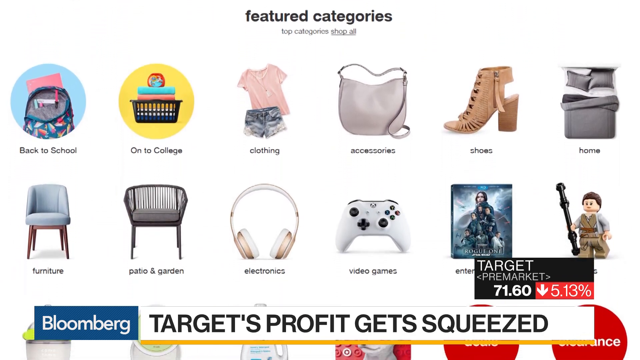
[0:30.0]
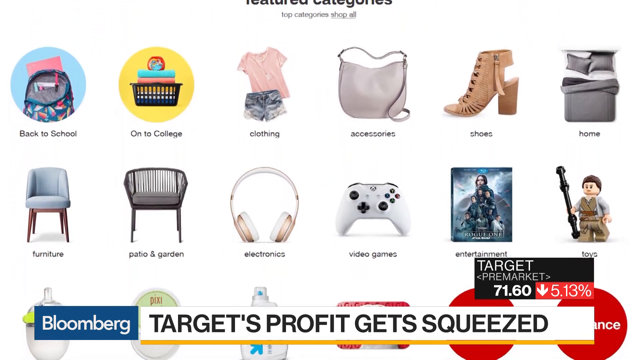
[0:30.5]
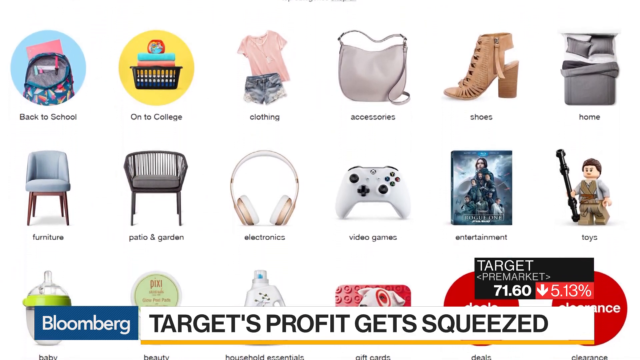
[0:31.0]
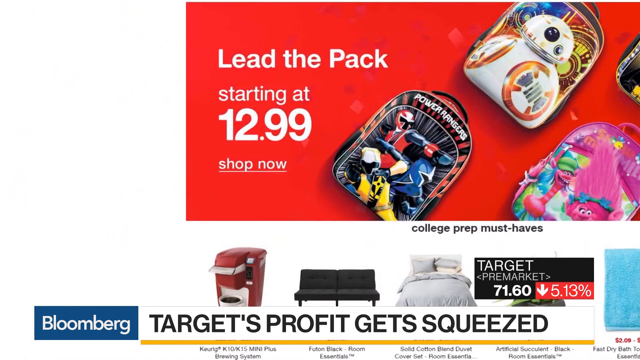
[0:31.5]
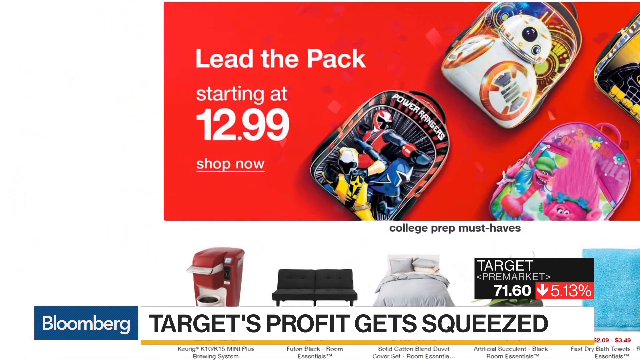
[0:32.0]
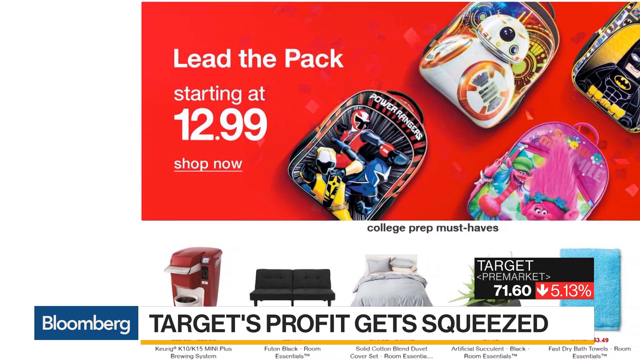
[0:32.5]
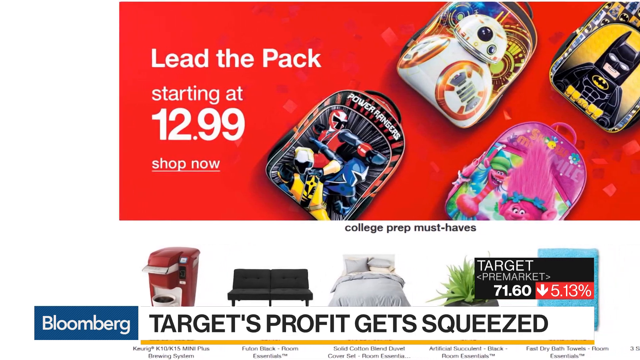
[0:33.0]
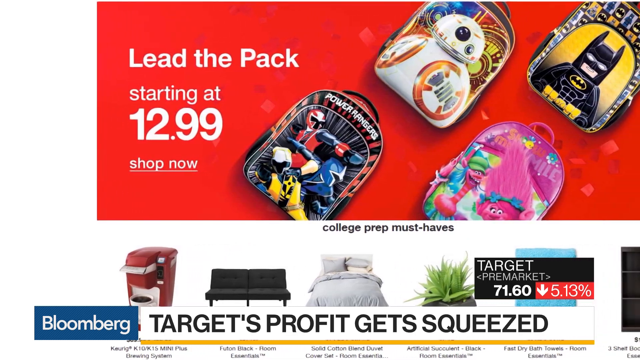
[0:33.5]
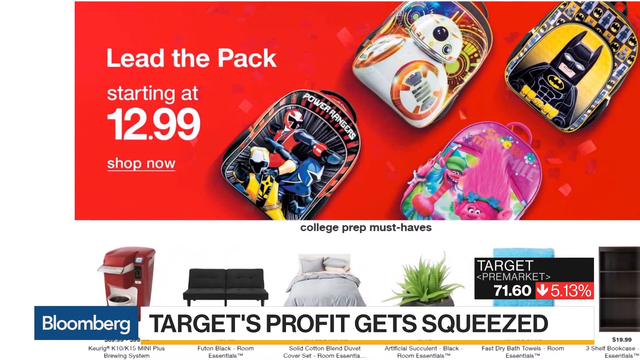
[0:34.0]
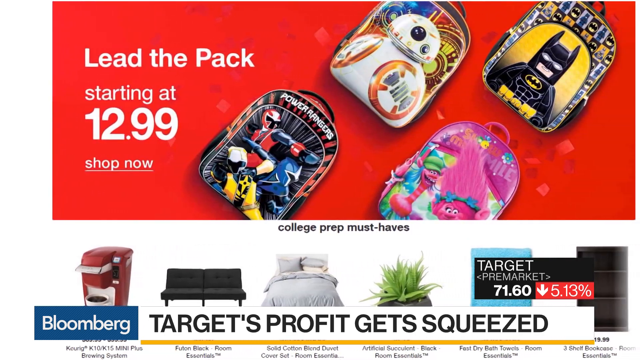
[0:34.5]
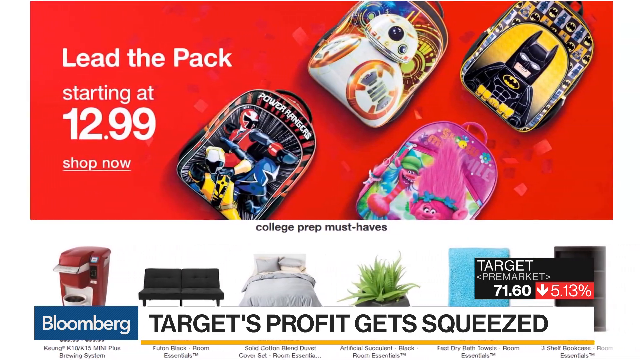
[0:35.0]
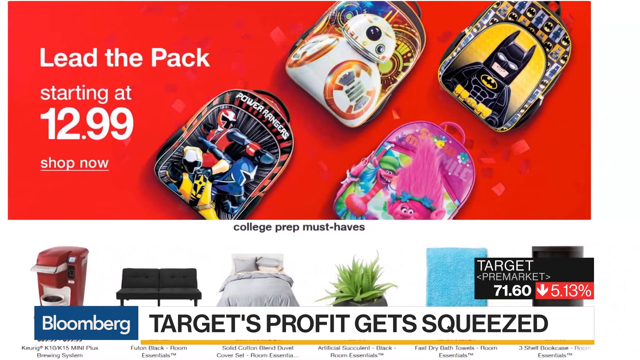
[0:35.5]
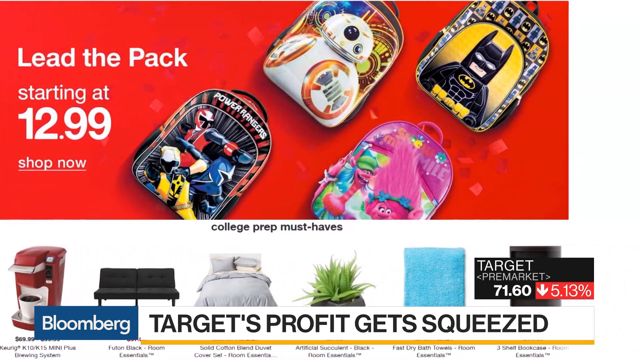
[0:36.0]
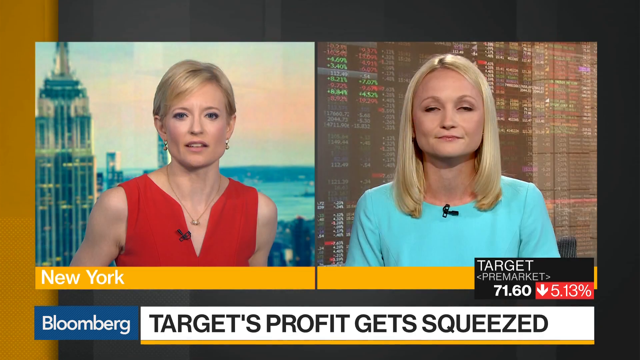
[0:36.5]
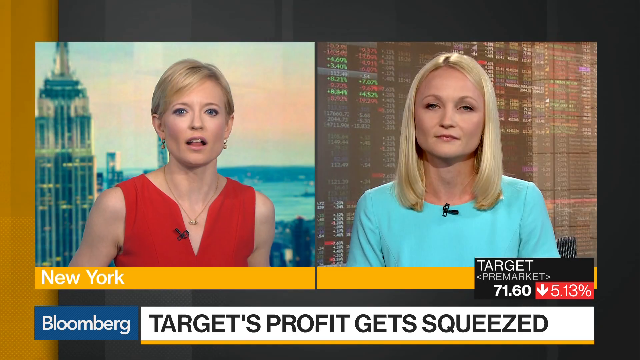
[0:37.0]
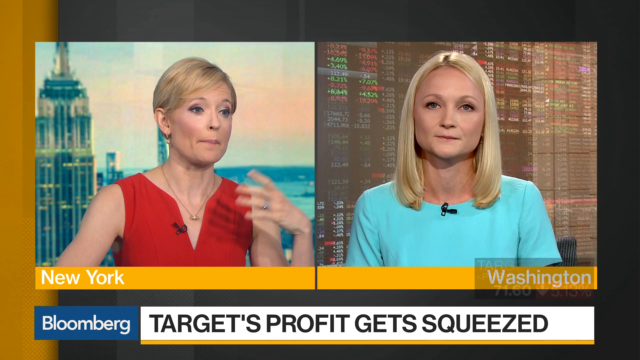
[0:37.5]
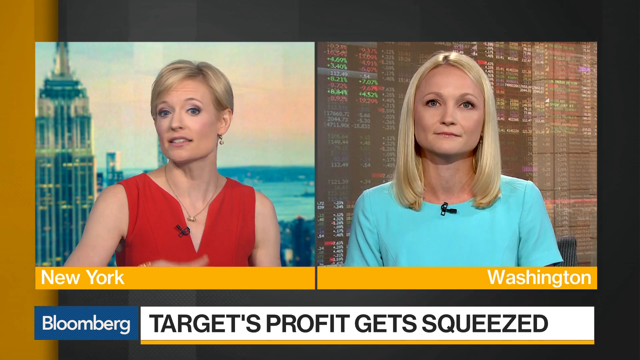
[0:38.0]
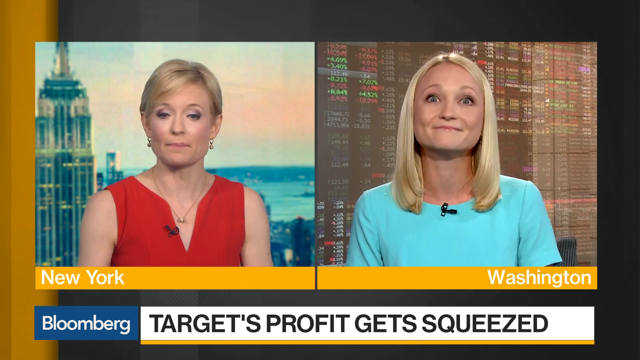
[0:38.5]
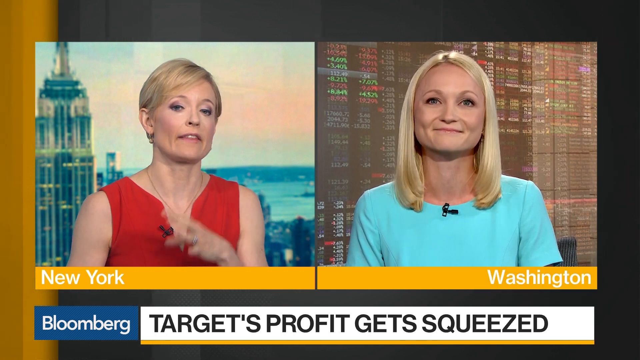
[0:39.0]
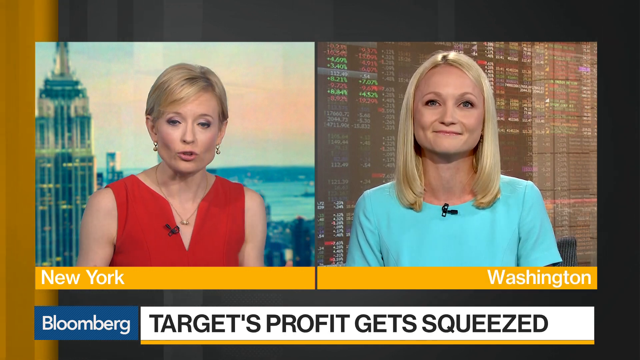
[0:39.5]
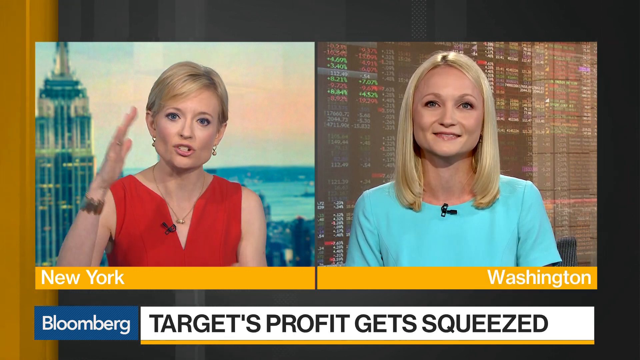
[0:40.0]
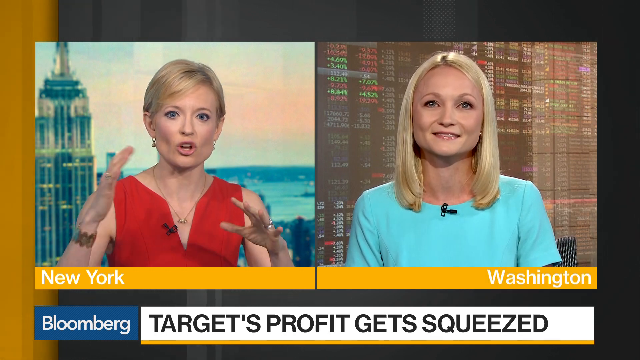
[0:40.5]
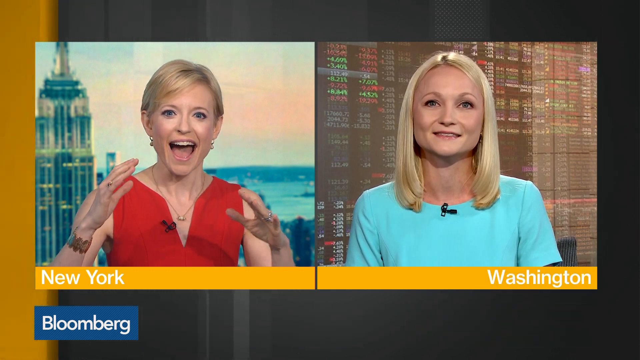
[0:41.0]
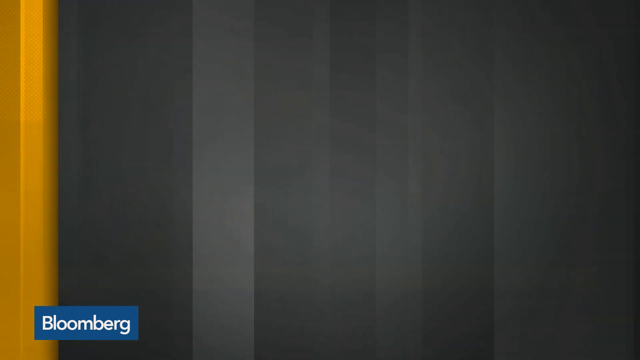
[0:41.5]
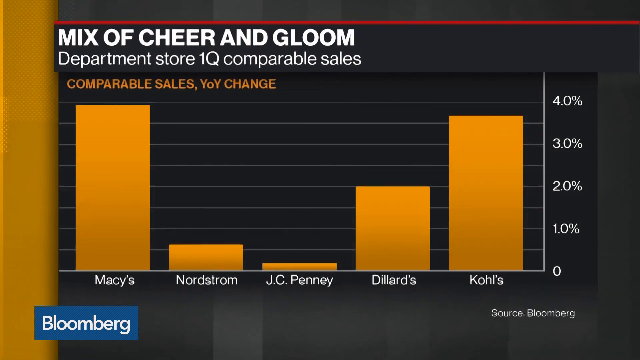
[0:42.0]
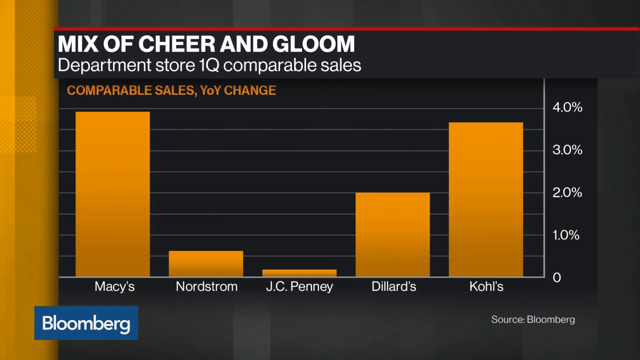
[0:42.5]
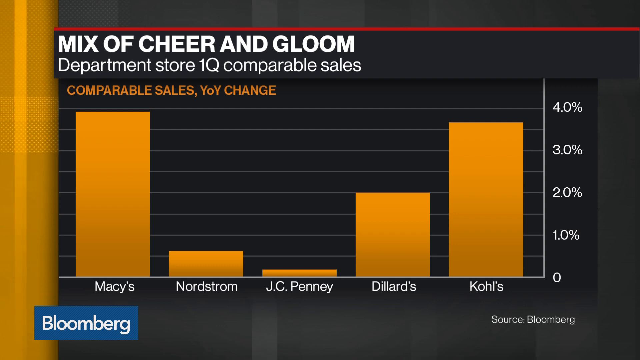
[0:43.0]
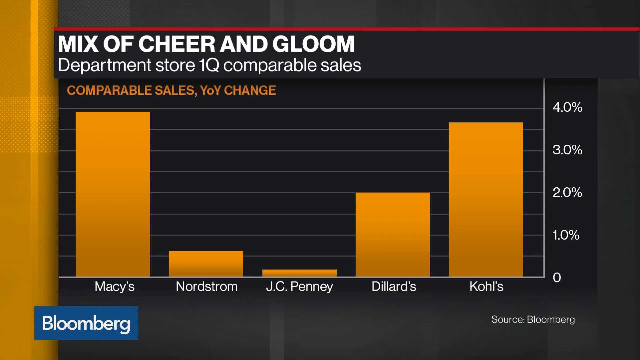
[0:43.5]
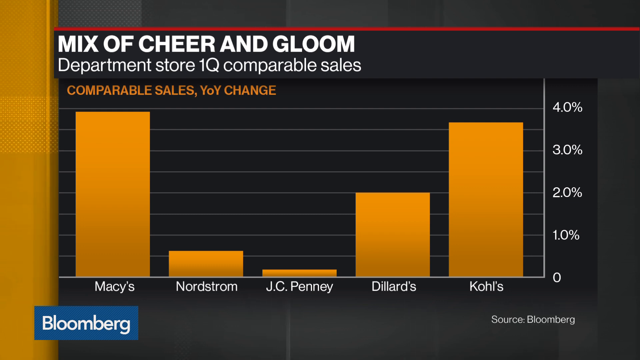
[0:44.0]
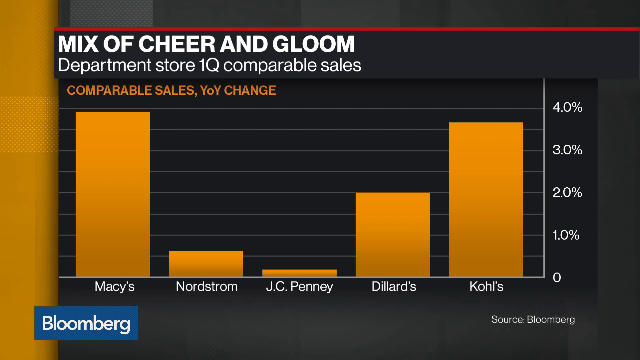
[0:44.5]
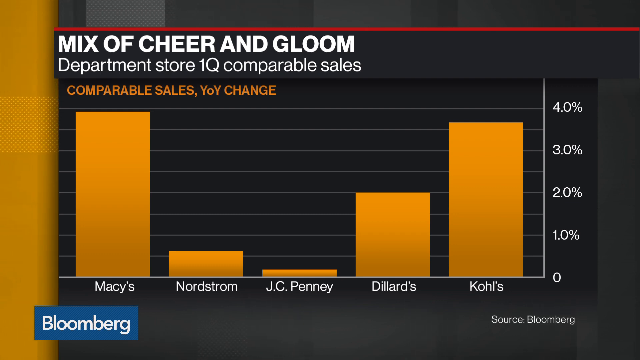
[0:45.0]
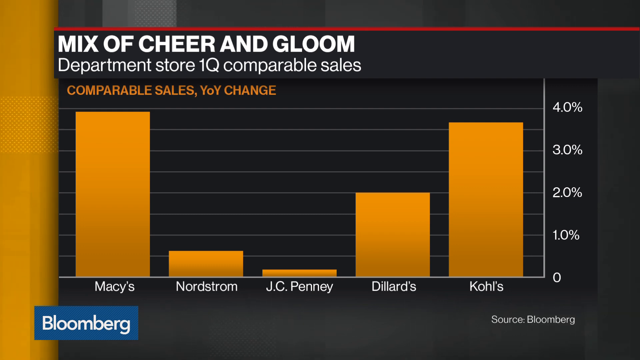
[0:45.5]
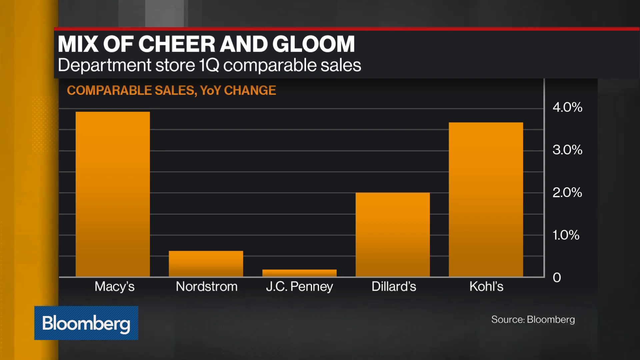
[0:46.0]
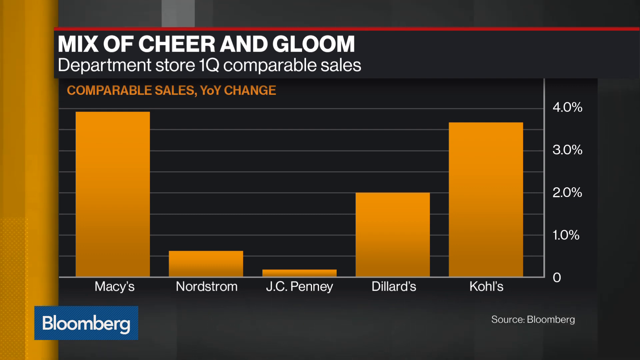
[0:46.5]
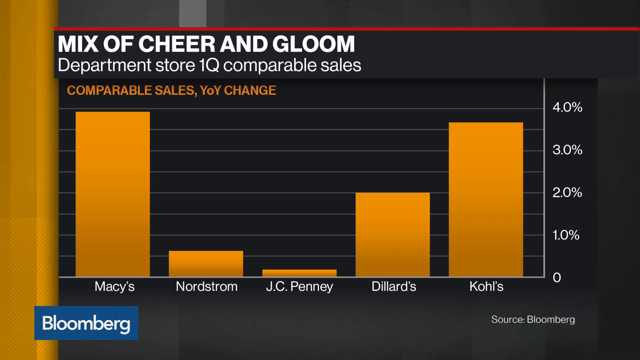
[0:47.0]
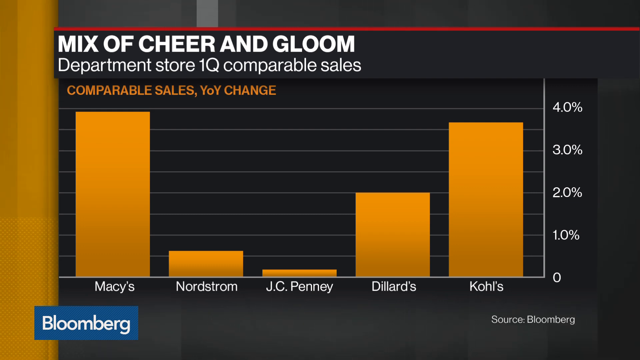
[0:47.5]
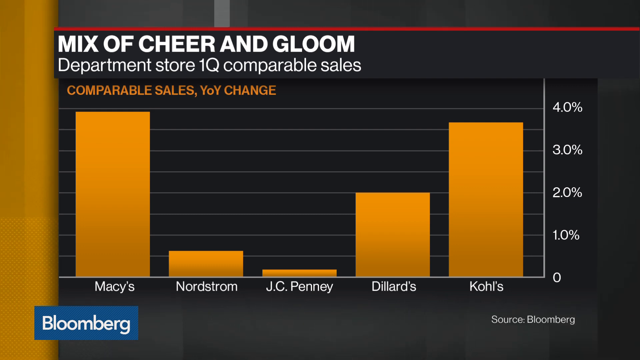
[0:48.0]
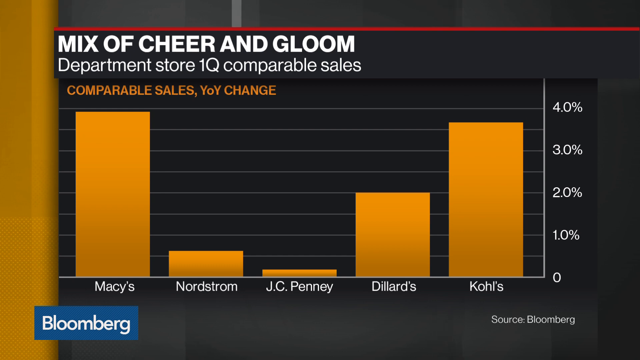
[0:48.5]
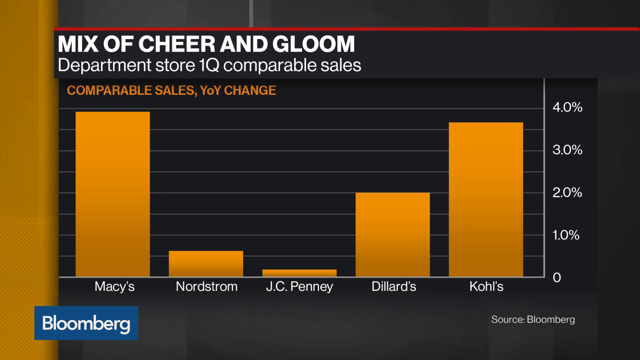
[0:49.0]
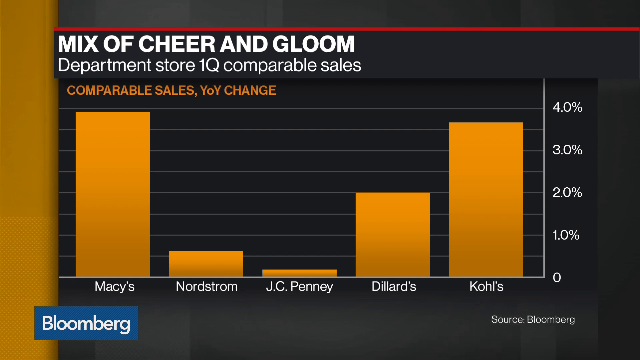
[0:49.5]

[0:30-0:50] The Target ad continues, appearing to be a newspaper ad of items on sale. It scrolls through different departments and shows back-to-school backpacks, and what look like other back-to-school items, on sale. The text says "the profits gets squeezed." The video then returns to the two anchorwomen. The one on the left, with short blonde hair and a red sleeveless dress, is sitting in front of a screen with a cityscape, and she speaks to the woman with shoulder-length blonde hair in a light blue dress, who is sitting in front of the stock market ticker. They continue talking back and forth. The screen then shows a bar graph with yellow bars on a black background, titled "a mix of cheer and gloom, department store 1Q comparable sales." Macy's is at the top, followed by Kohl's, then Dillard's, then Nordstrom, with JCPenney at the bottom, comparing the department stores.